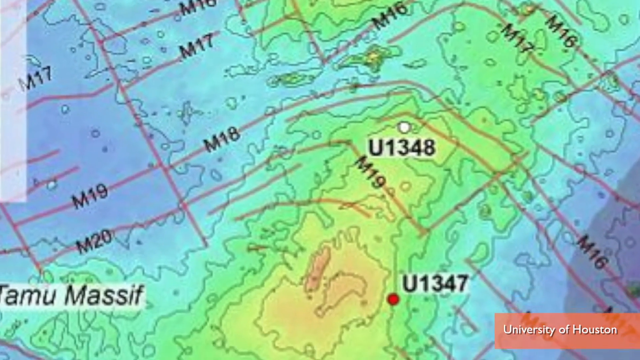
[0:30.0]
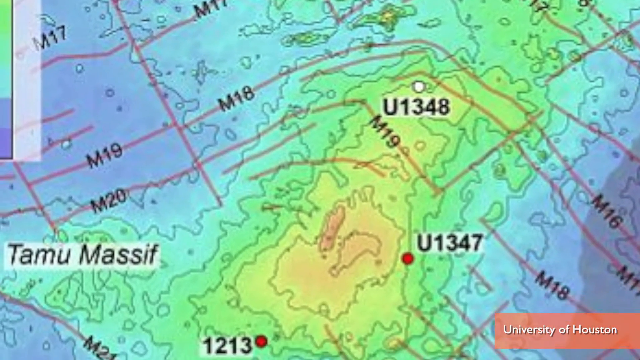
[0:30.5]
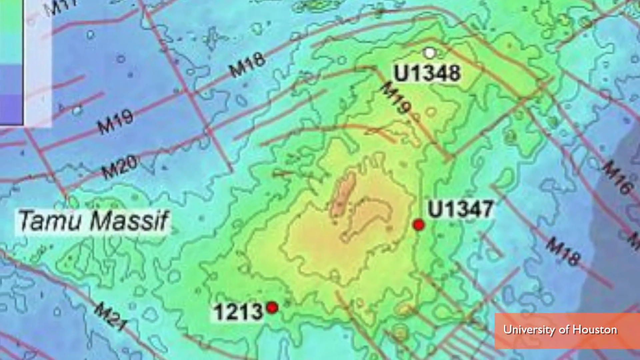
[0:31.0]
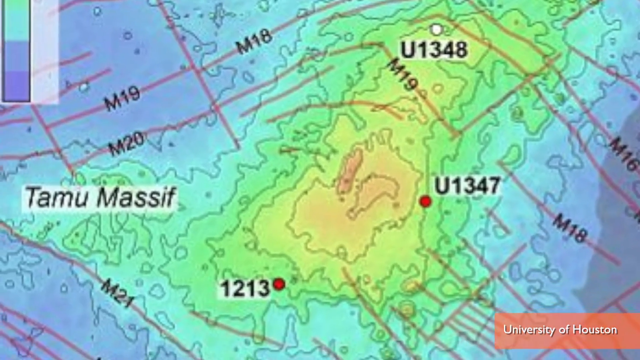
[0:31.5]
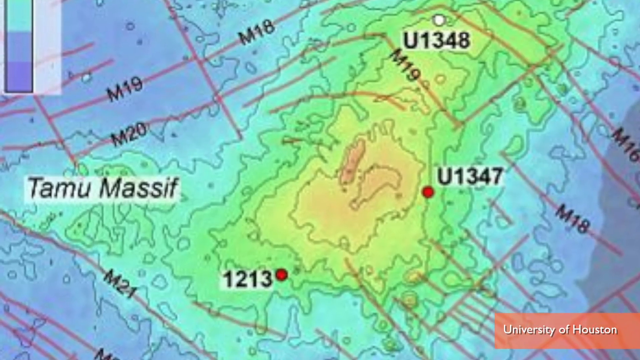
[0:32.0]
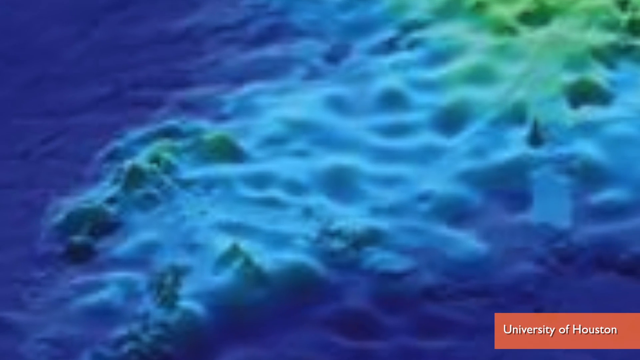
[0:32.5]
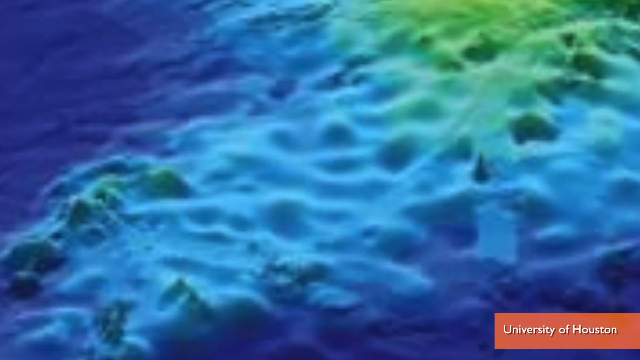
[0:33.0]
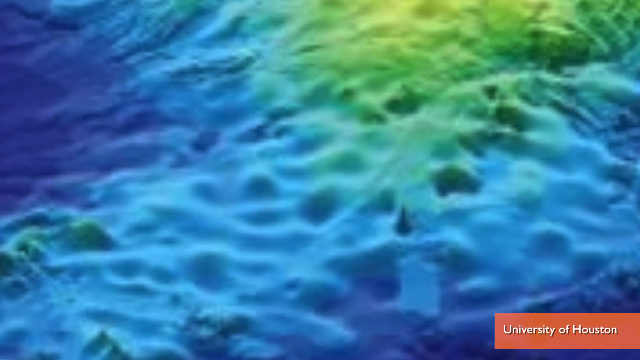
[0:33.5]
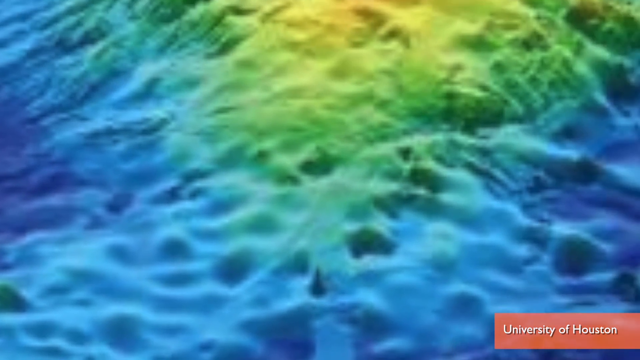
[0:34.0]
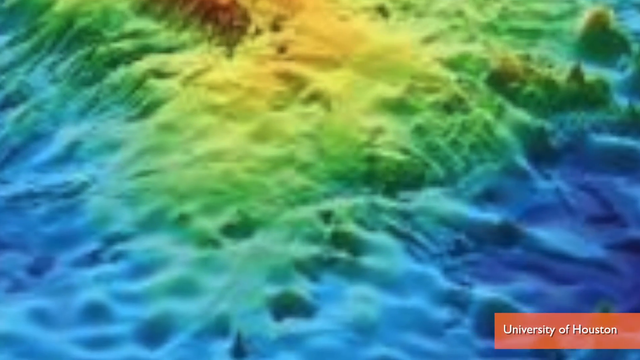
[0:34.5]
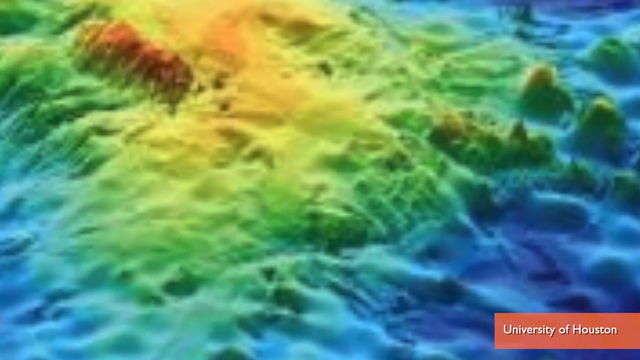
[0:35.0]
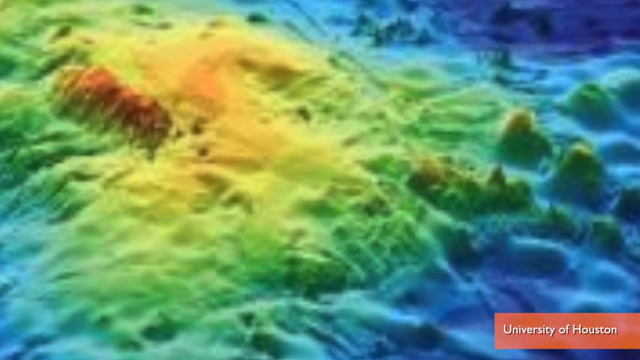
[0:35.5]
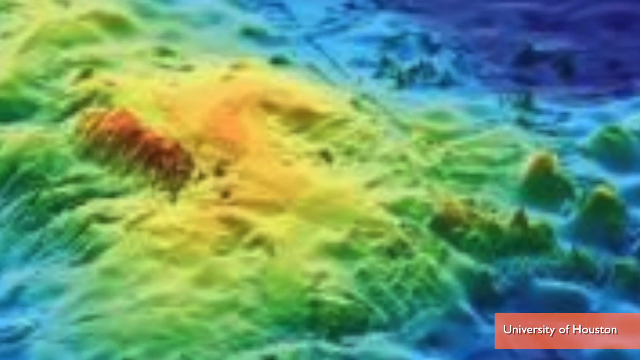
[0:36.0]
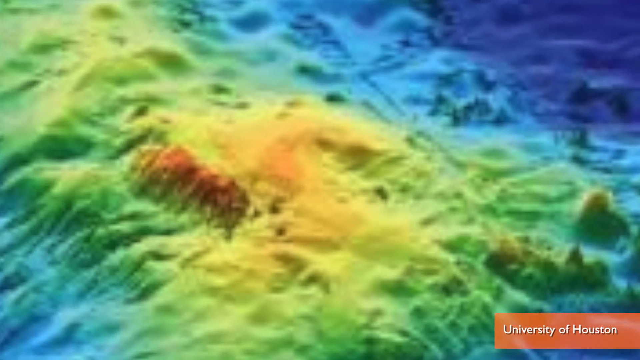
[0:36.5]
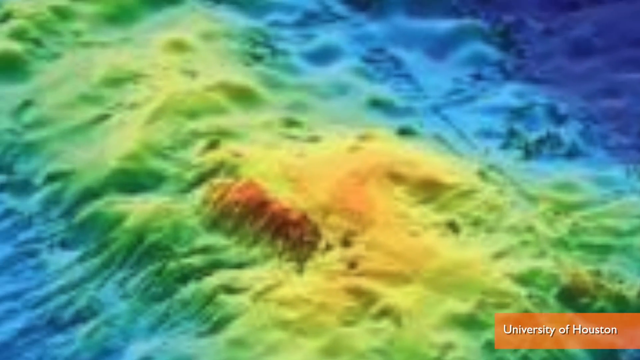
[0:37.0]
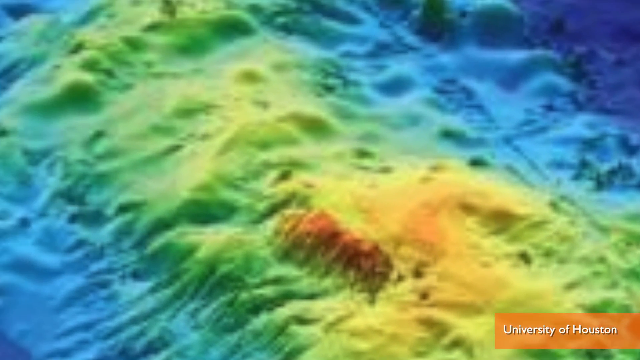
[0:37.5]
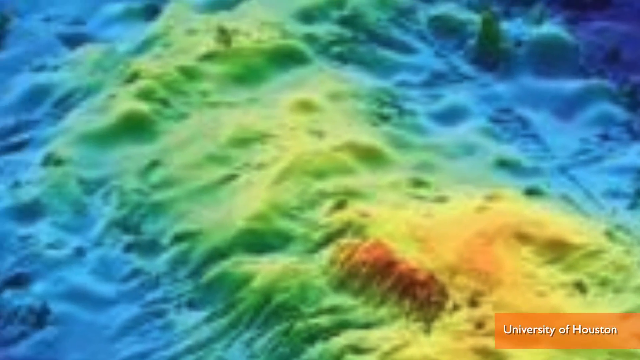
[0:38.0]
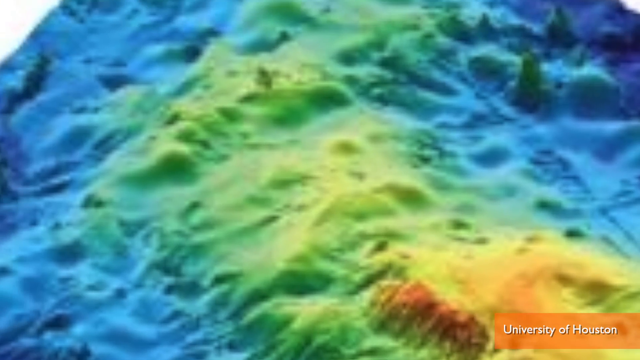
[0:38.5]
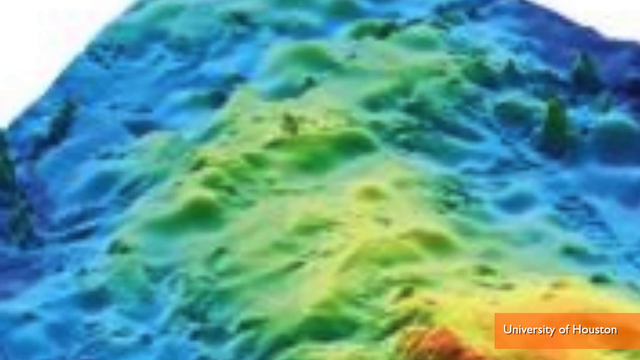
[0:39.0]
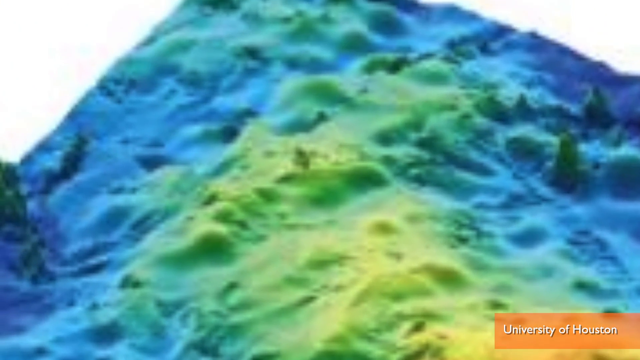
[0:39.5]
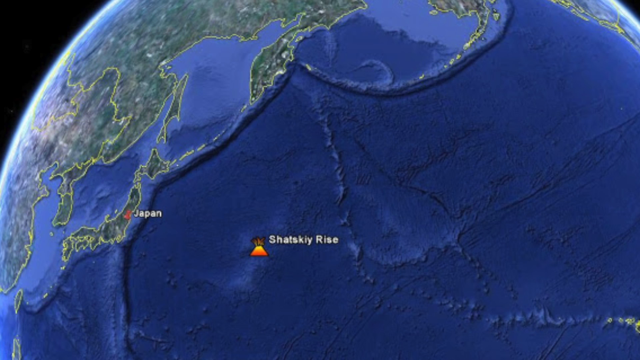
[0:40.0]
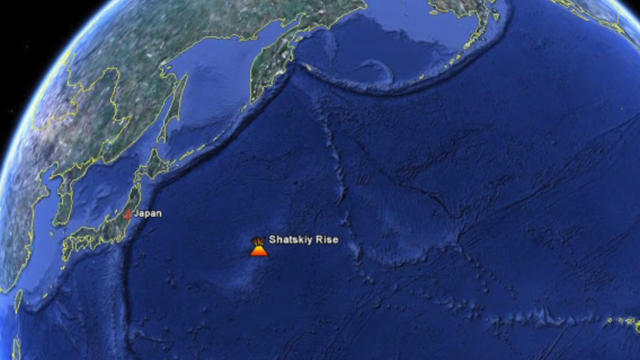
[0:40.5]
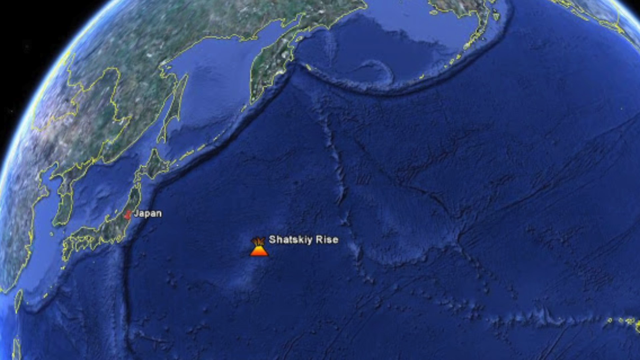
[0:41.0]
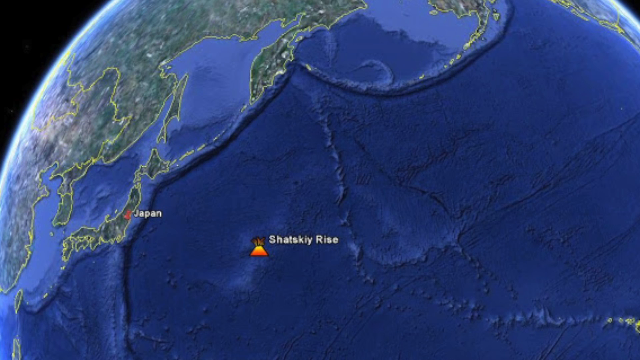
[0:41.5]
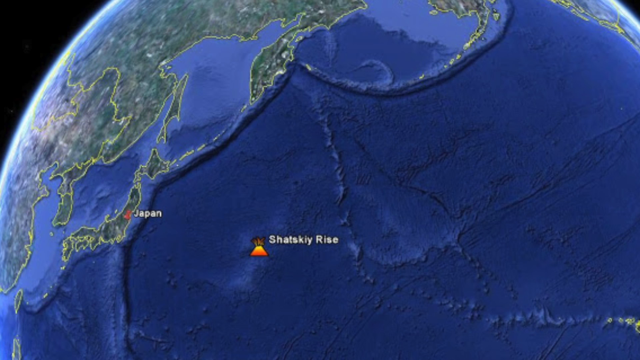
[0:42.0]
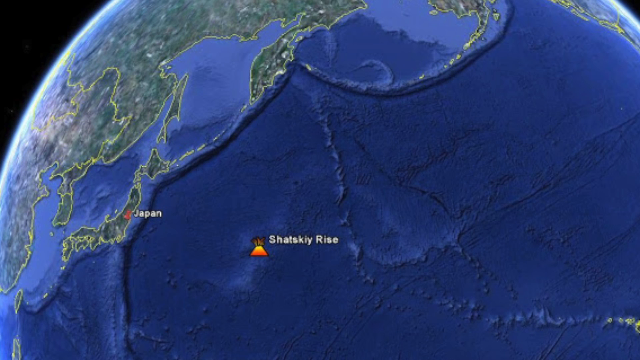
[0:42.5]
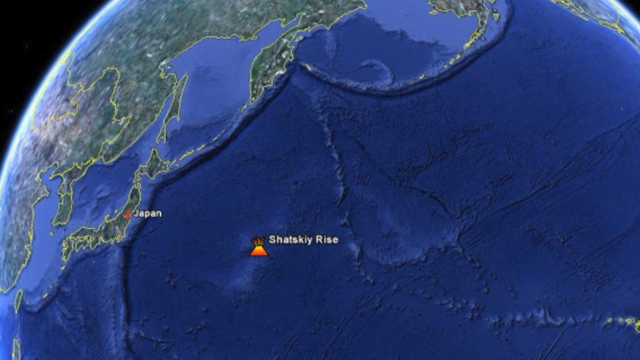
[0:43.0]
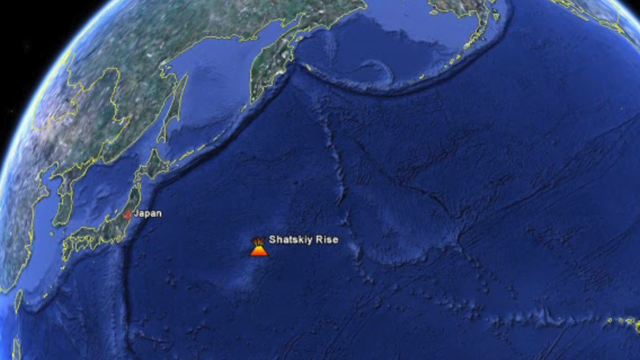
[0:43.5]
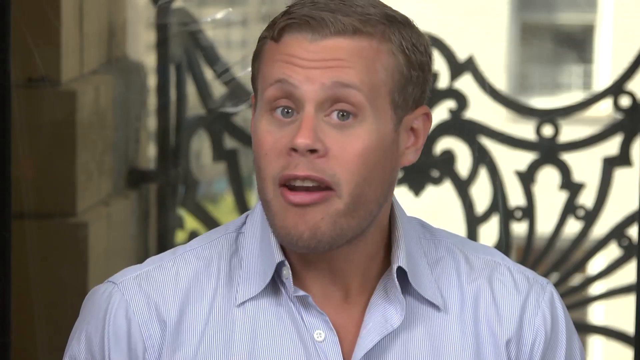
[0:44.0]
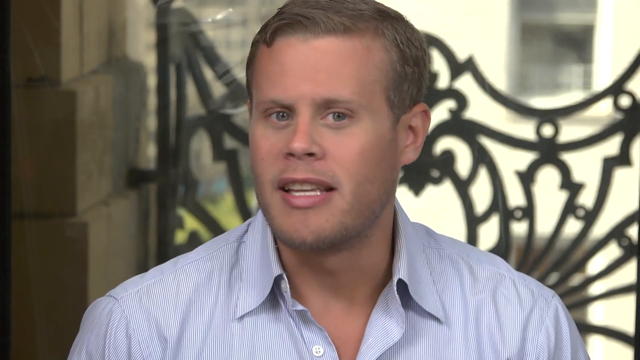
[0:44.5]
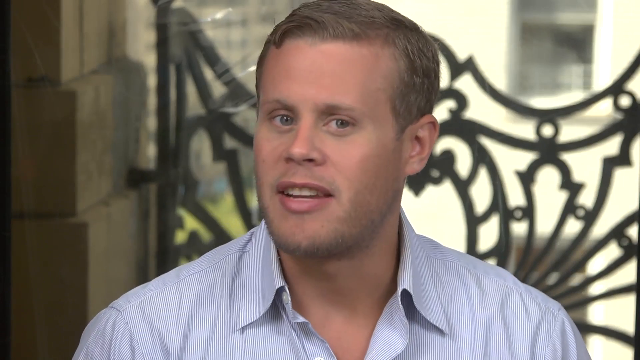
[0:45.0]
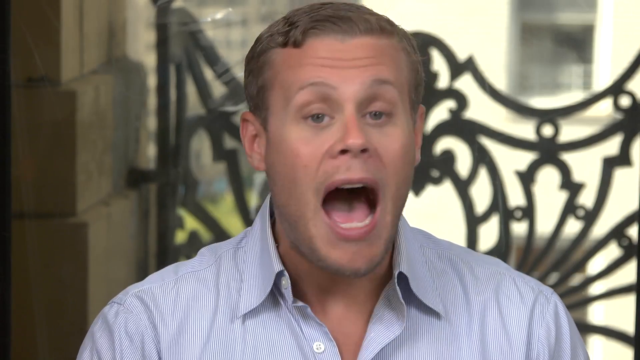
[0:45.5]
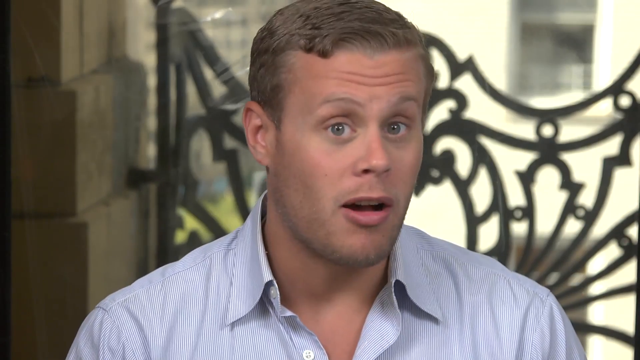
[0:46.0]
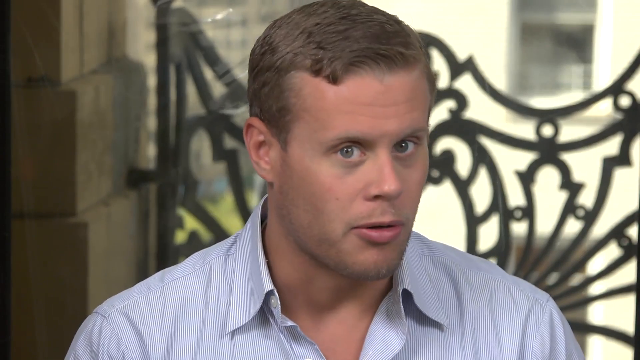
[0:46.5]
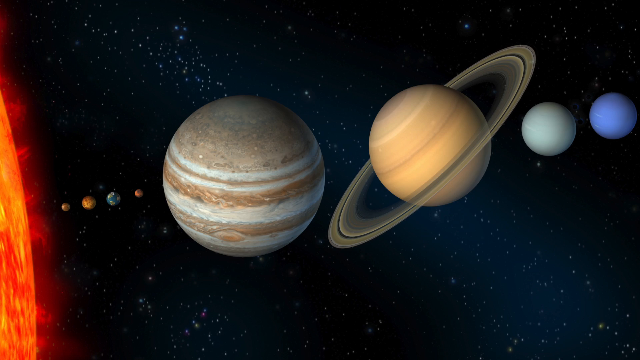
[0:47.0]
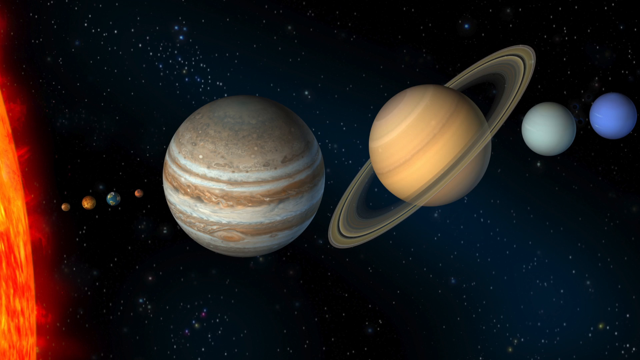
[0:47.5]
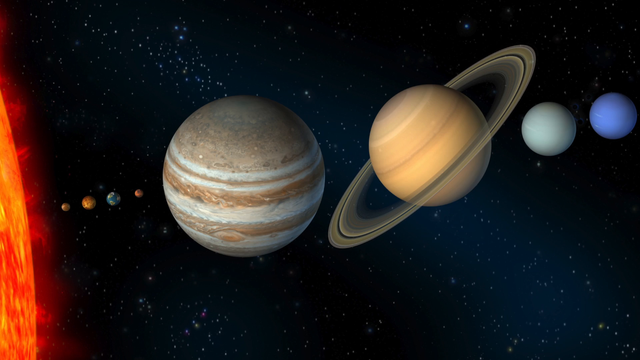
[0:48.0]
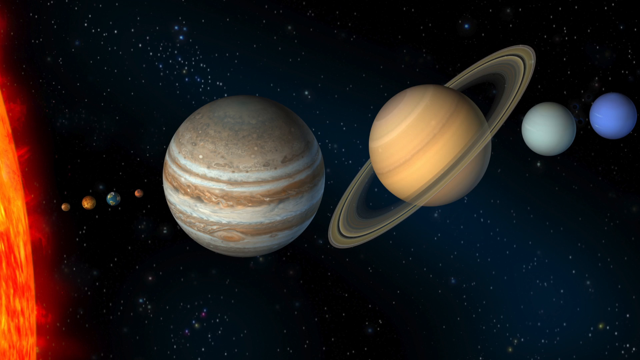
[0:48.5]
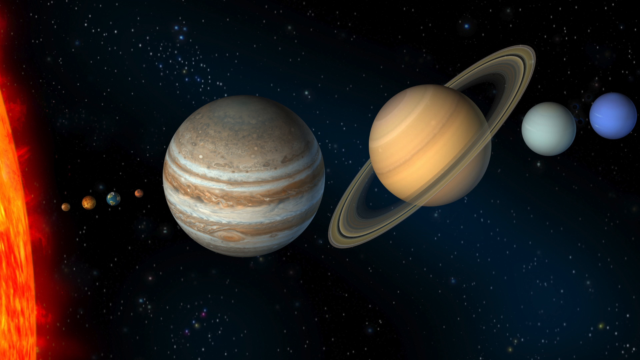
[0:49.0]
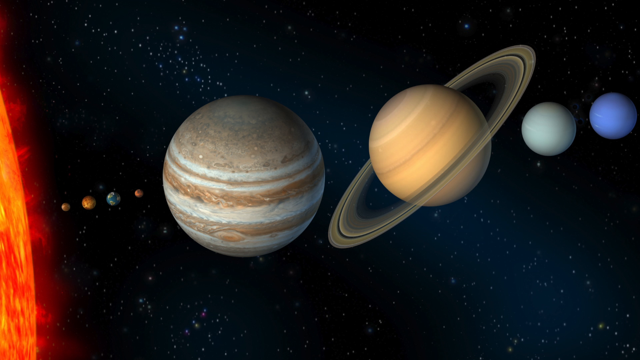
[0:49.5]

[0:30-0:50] The camera pans over the 2D map, and then the view returns to the three-dimensional topographic map with all its colors. Next comes a globe: a blue sphere with green continents. Something in the middle of the ocean is labeled with what looks like "Shanskli Rise", and Japan is also labeled. The man in front of the iron gate appears again, talking. The view then switches to a graphic of the planets of the solar system against a black cosmic sky. A tiny bit of what appears to be the bright red sun is on the left, followed by four smaller planets, then a large planet with kind of brown rings on its surface. Next to it on the right is Saturn, tilted and light tan, with a ring going around it. A slightly smaller light green planet or circle is a little to the right of Saturn, and a blue ball is next to the green one.